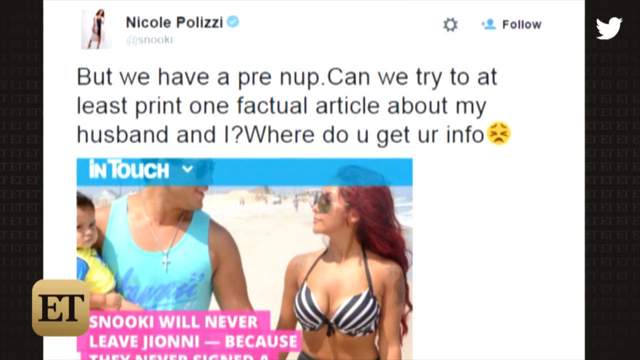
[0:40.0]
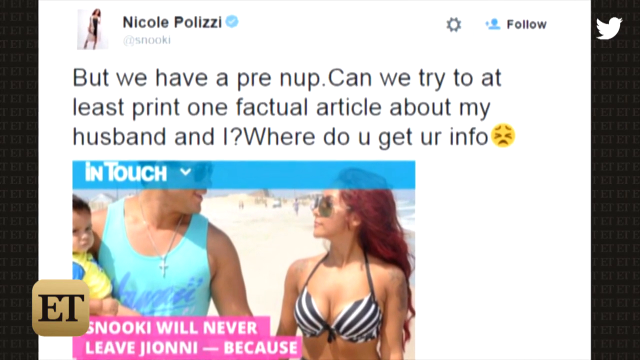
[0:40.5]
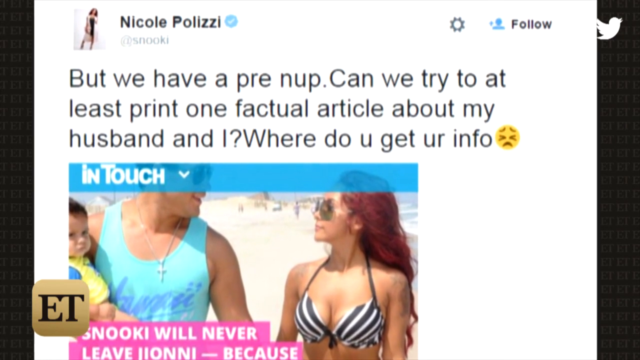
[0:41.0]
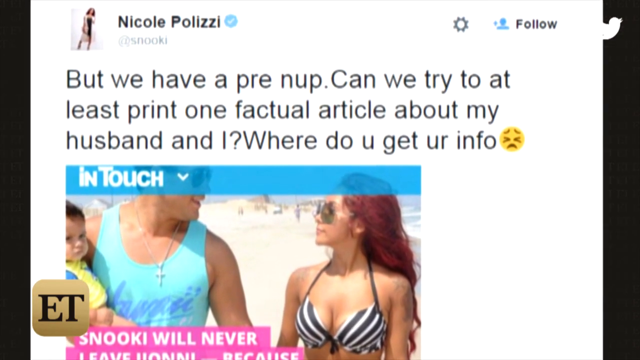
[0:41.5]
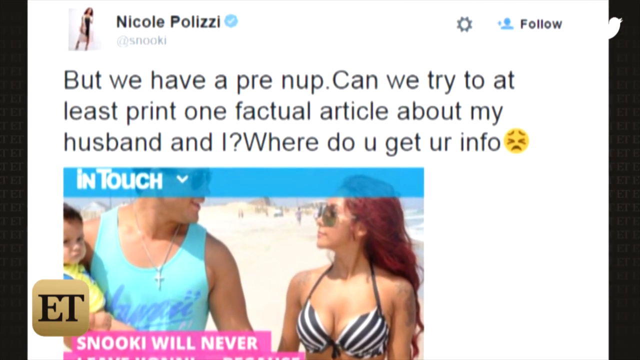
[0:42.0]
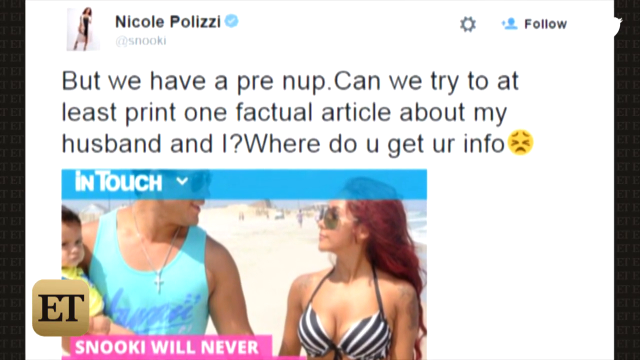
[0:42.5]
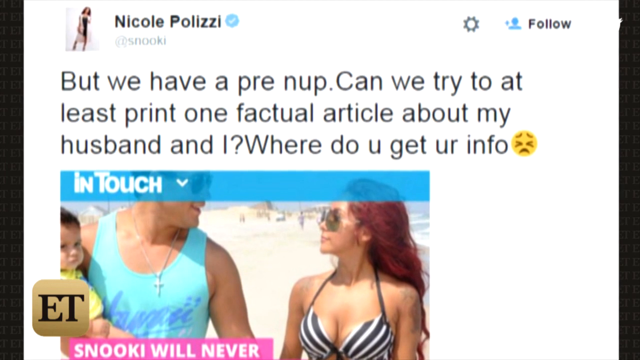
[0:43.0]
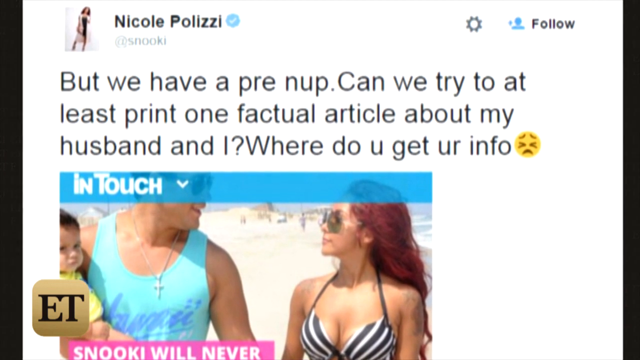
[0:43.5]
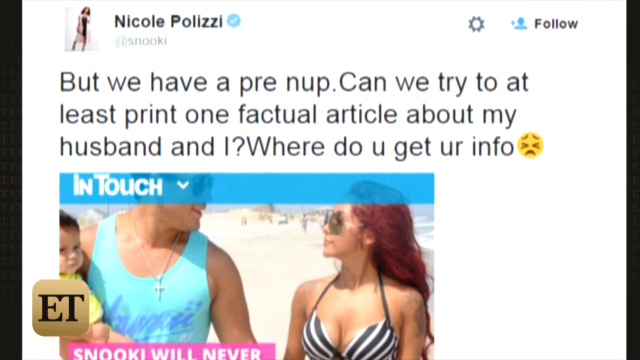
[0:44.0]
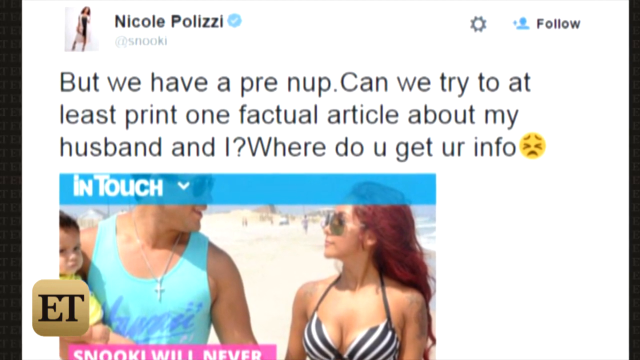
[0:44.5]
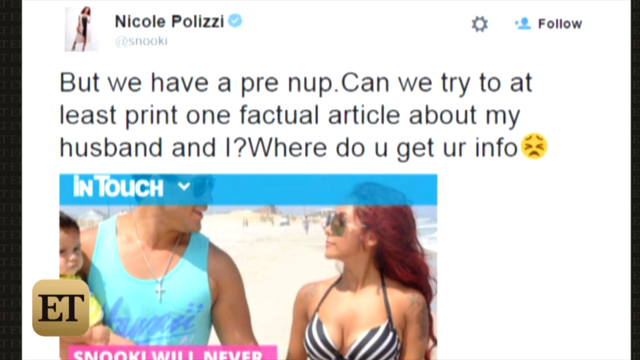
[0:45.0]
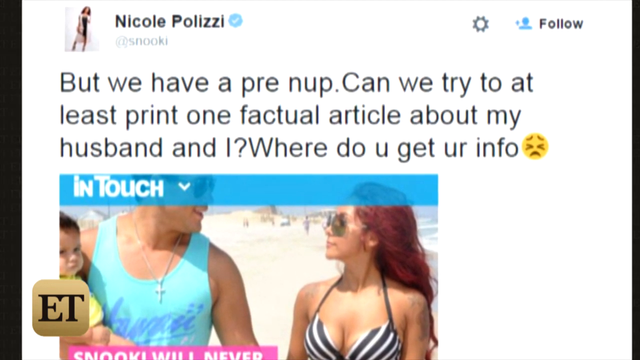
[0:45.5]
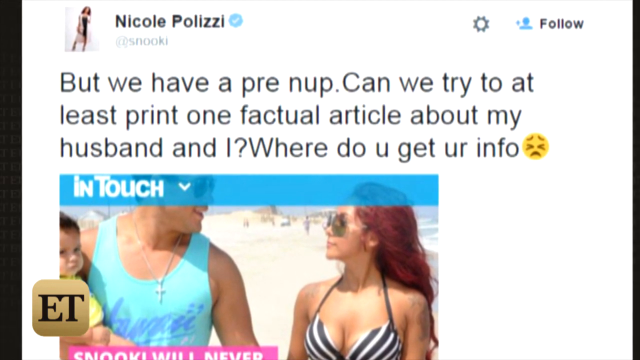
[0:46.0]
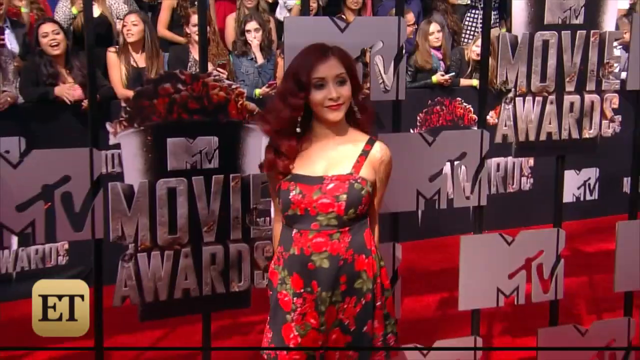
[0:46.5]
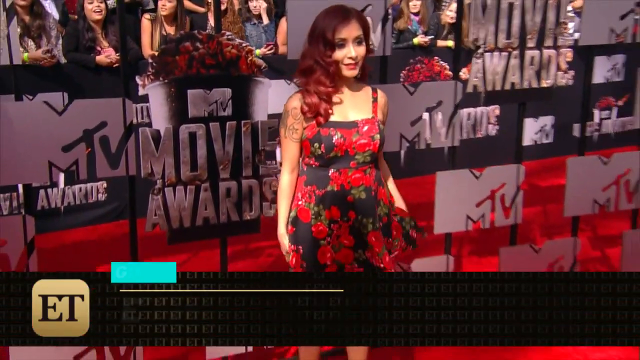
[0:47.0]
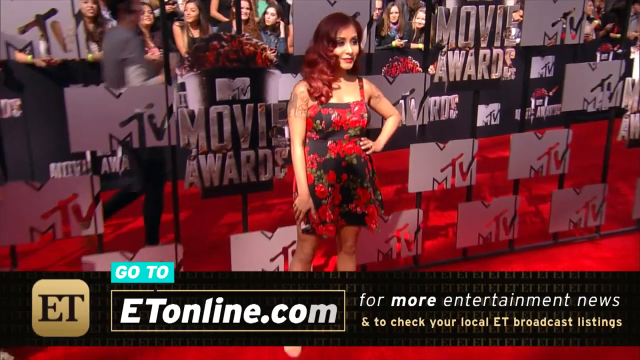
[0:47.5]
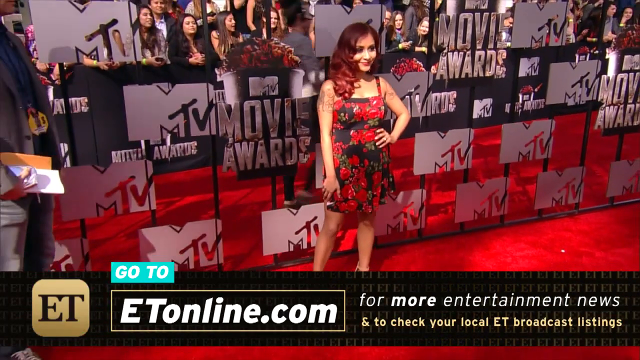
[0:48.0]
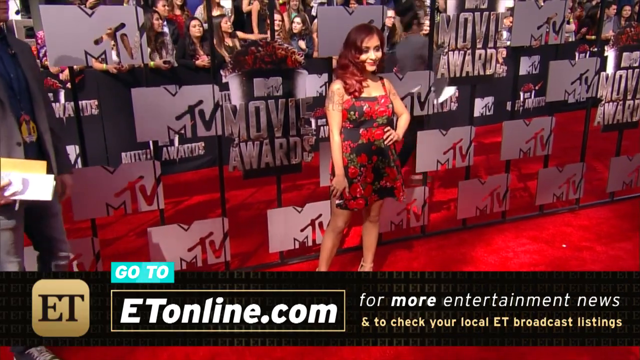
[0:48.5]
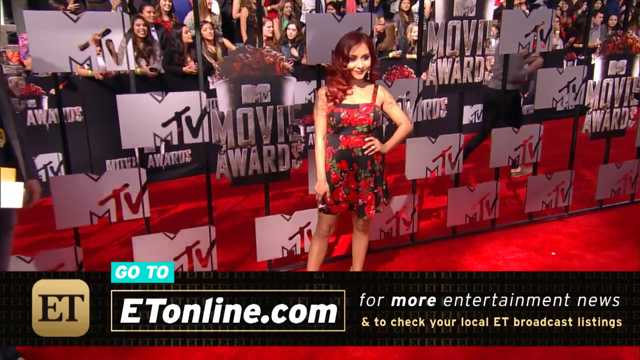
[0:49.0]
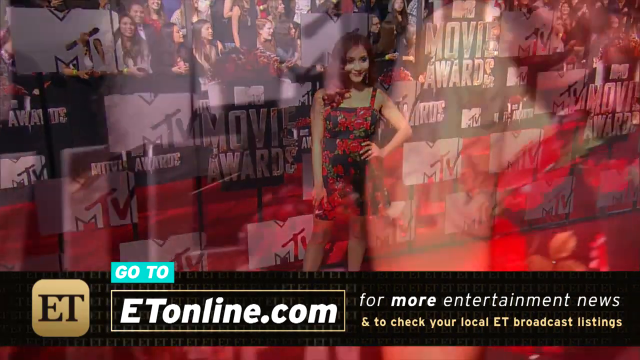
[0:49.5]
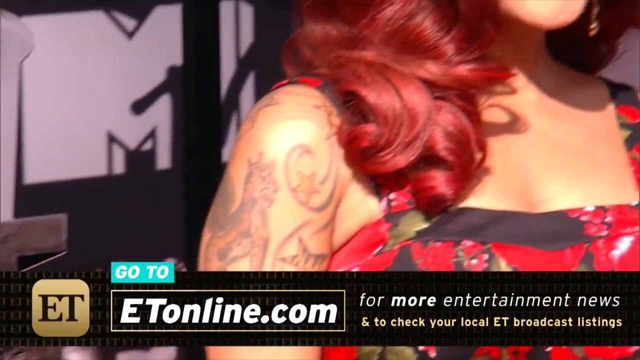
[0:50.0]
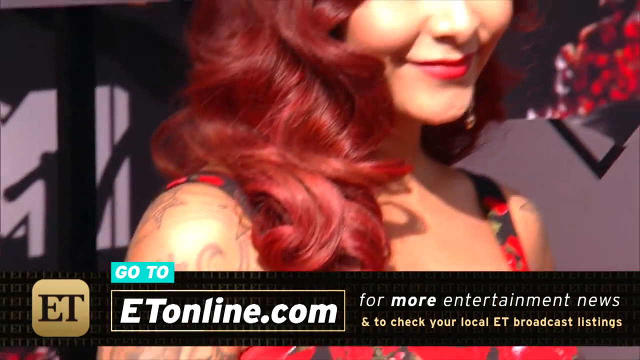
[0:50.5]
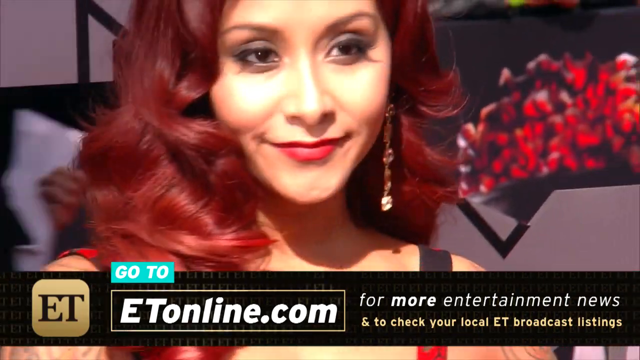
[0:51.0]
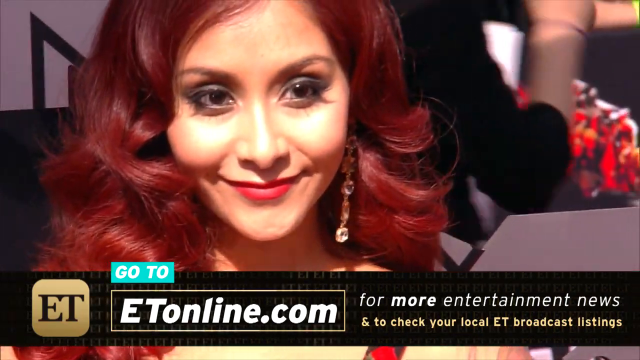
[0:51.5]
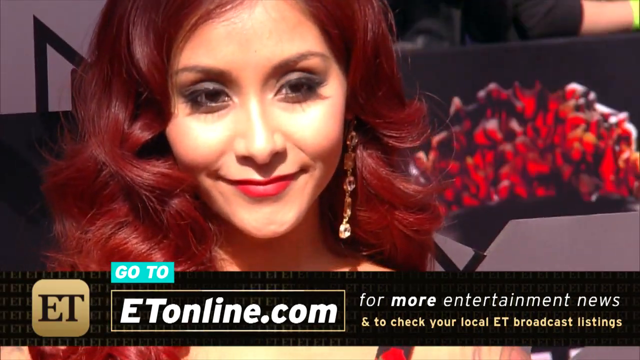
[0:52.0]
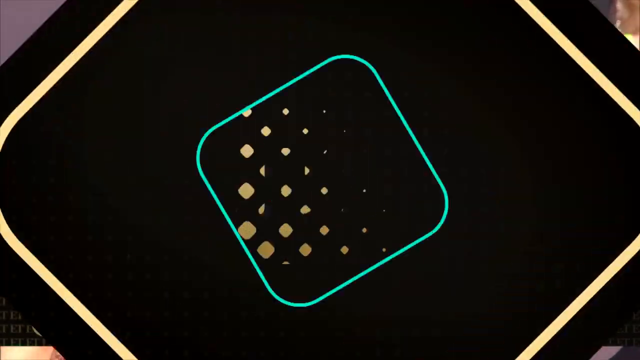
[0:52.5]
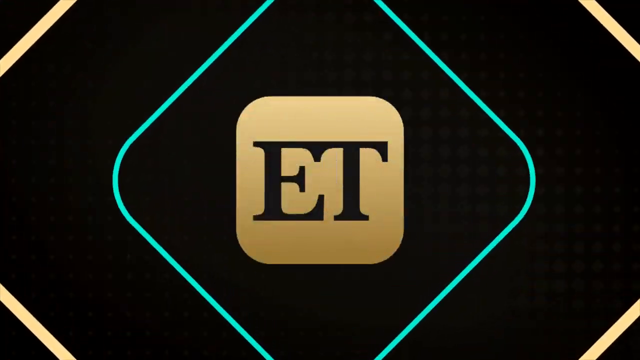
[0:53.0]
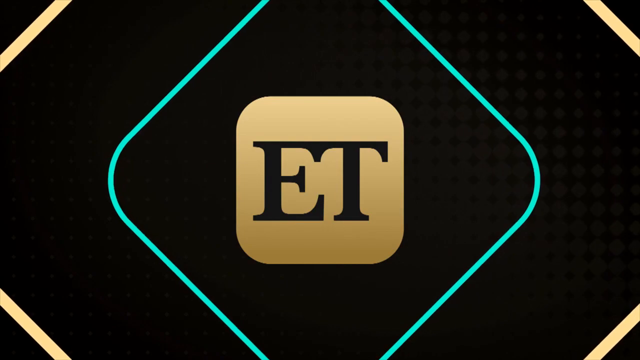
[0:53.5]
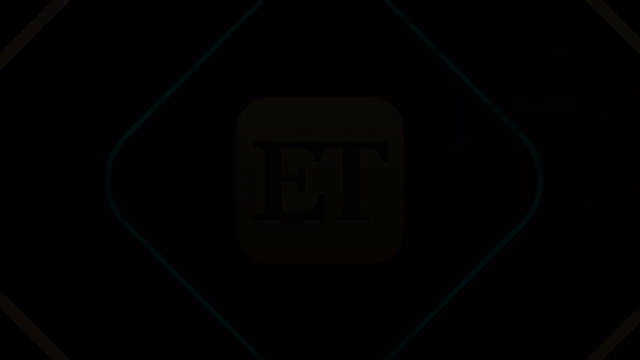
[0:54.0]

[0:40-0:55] A tweet from Nicole Polizzi states that she does have a prenup and asks for one factual article to be printed about her husband and her. This changes to a video of a woman getting her picture taken at the MTV Movie Awards. She wears a black and red dress, and a large number of camera flashes are going off. Behind her are a number of people sitting or standing and looking, and at the bottom is a banner that reads "go to etonline.com" and, to the right, "for more entertainment news & to check your local ET broadcast listings". The video cuts to a close-up of the woman getting her picture taken as she looks towards the camera and smiles. She wears earrings, has red hair, and is standing on a red carpet. The video then cuts to a black background with a stylized ET logo and some squares around it.